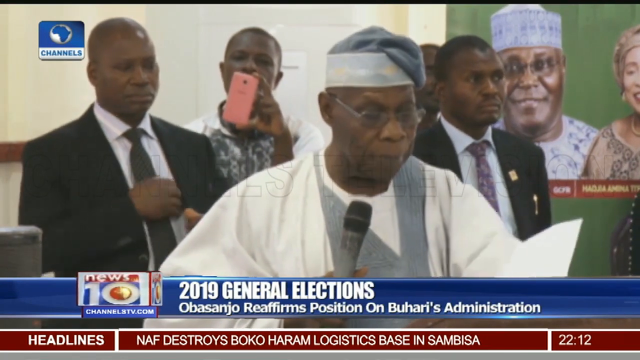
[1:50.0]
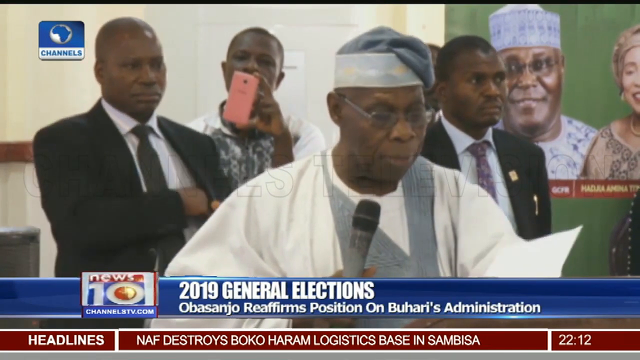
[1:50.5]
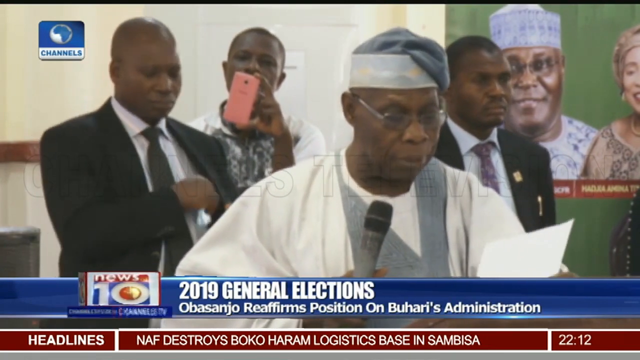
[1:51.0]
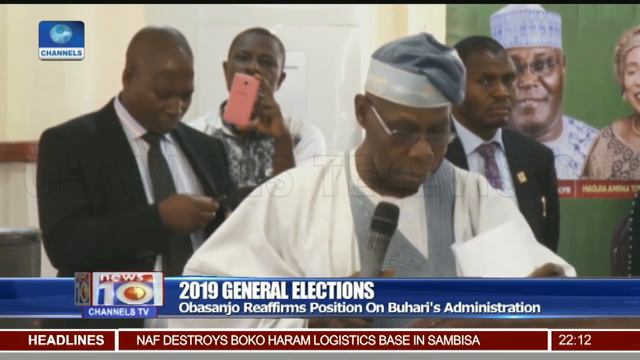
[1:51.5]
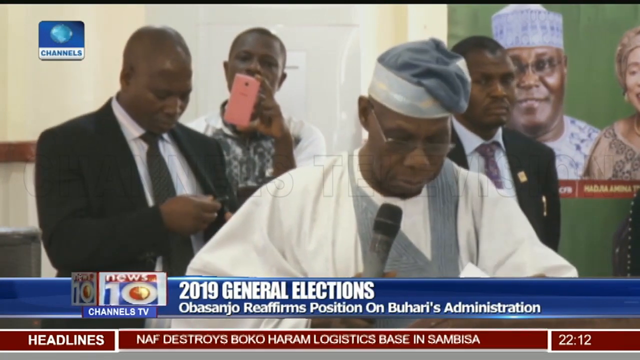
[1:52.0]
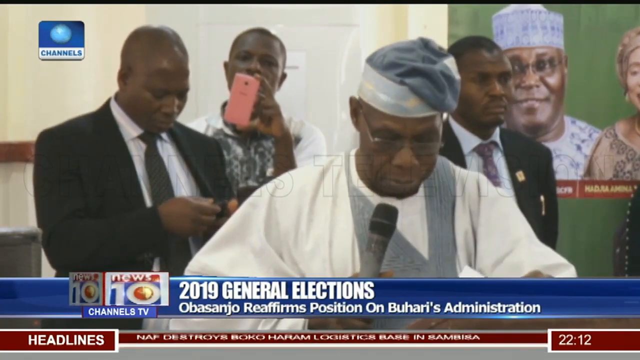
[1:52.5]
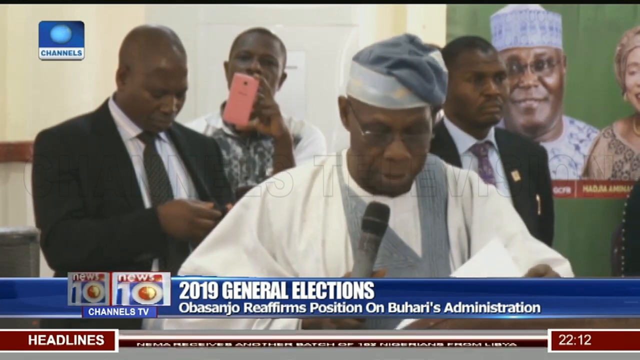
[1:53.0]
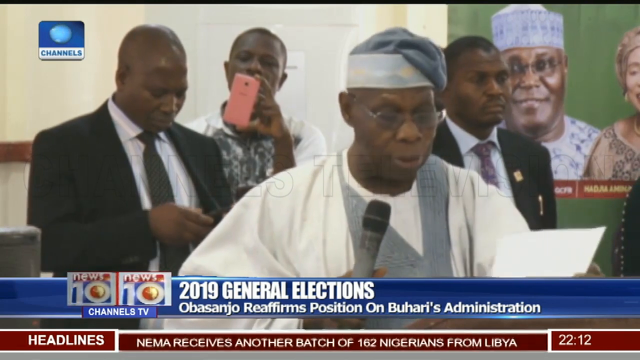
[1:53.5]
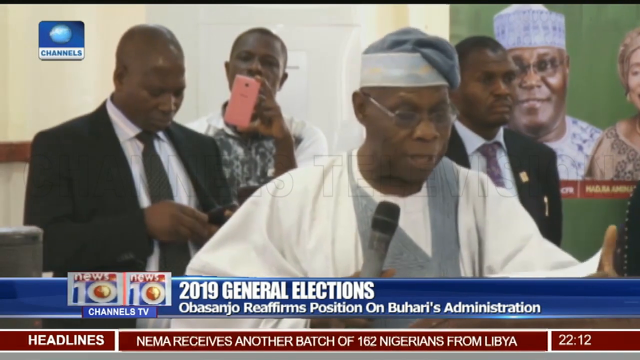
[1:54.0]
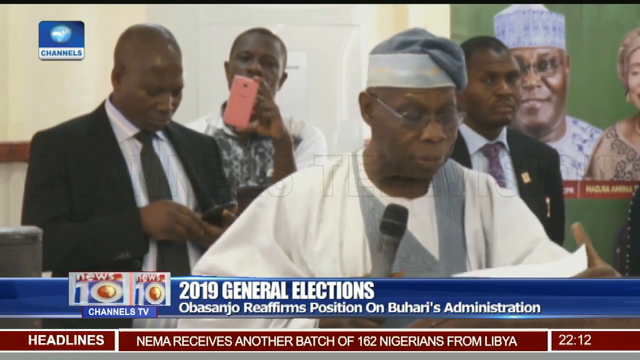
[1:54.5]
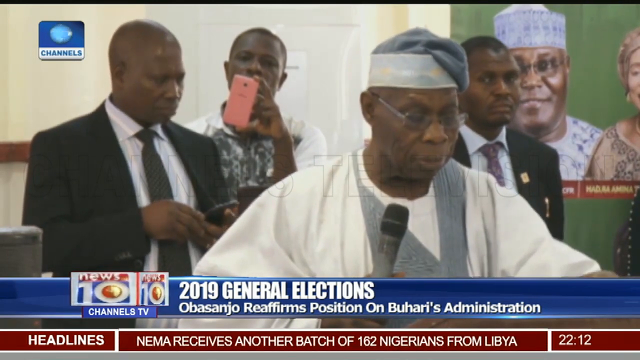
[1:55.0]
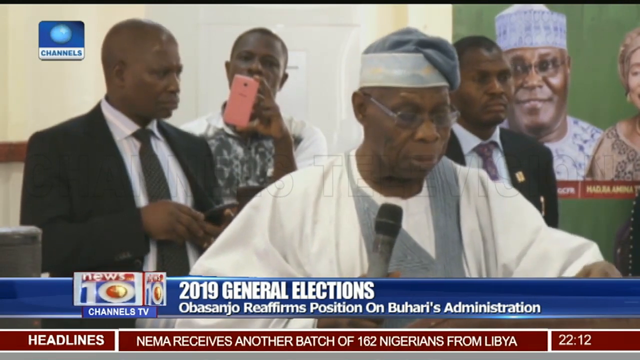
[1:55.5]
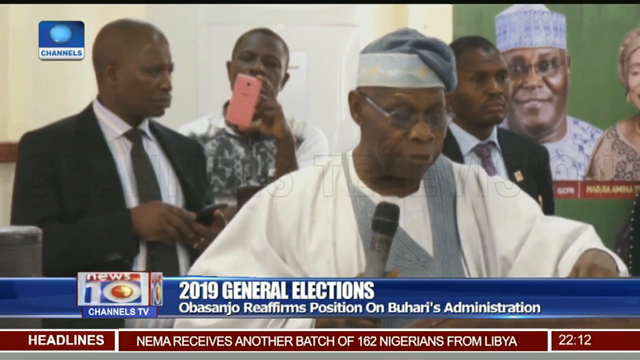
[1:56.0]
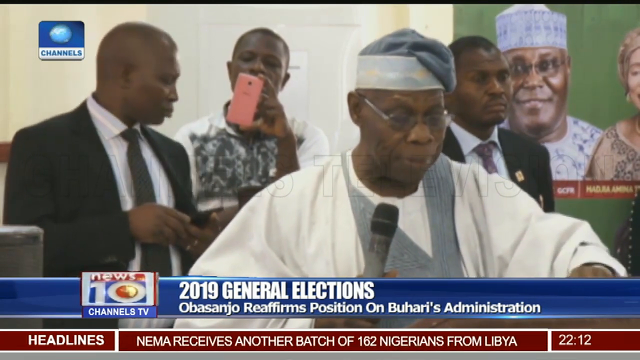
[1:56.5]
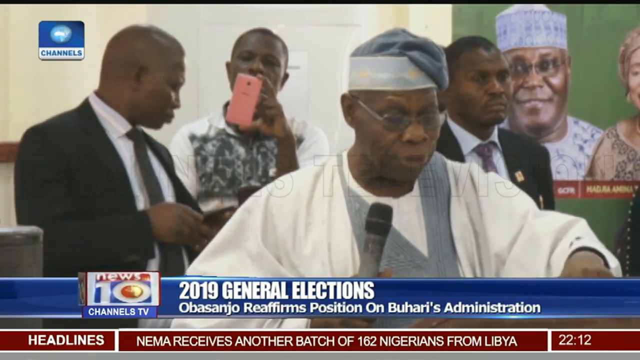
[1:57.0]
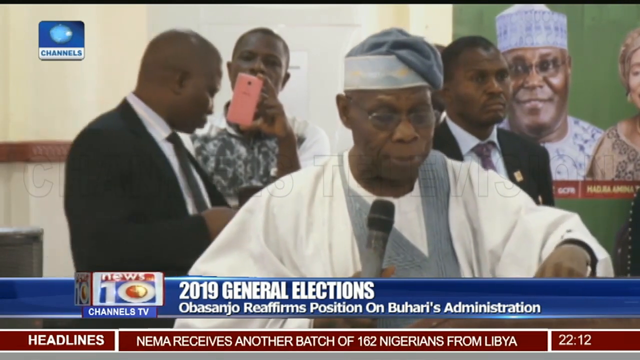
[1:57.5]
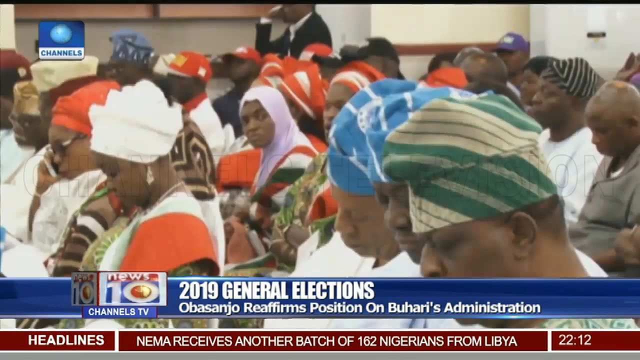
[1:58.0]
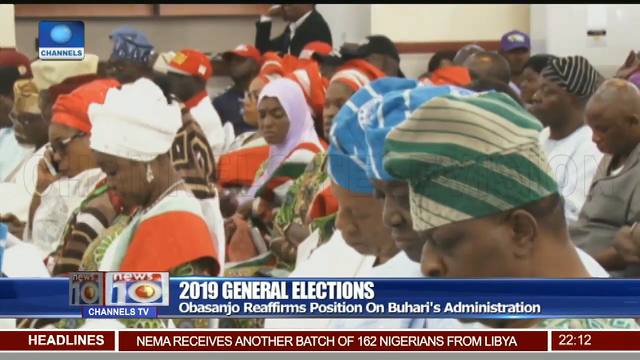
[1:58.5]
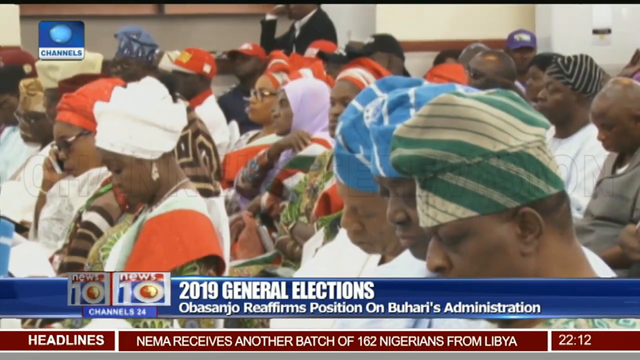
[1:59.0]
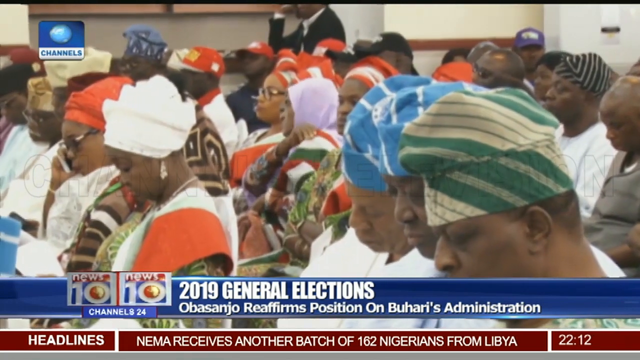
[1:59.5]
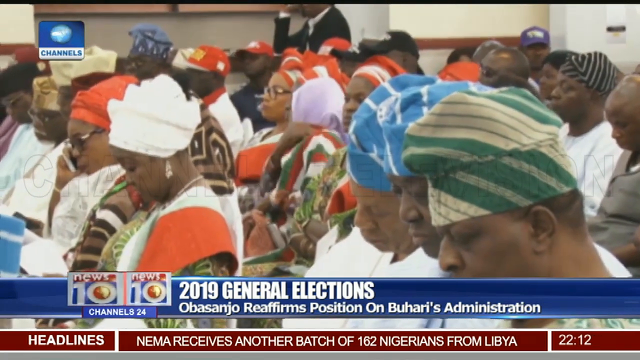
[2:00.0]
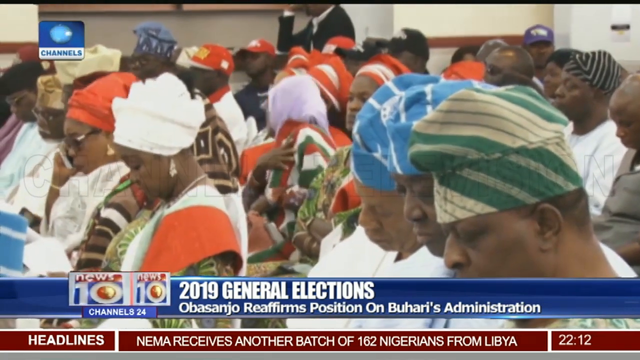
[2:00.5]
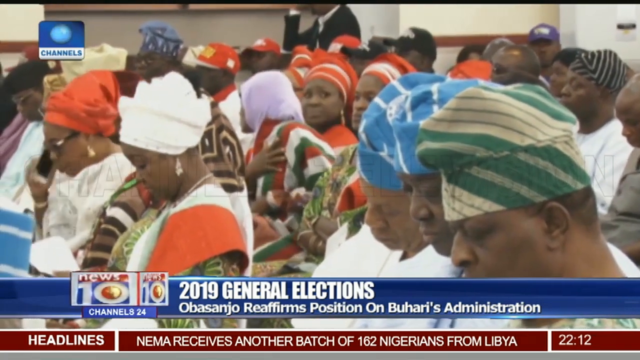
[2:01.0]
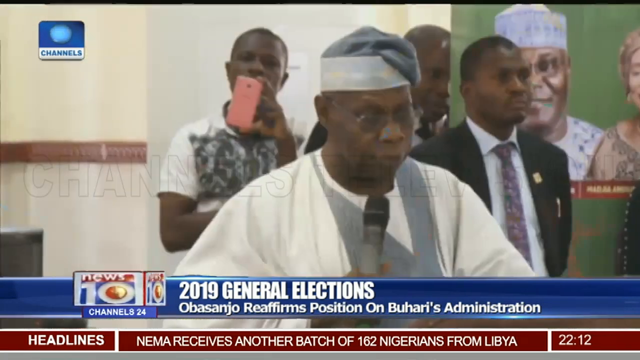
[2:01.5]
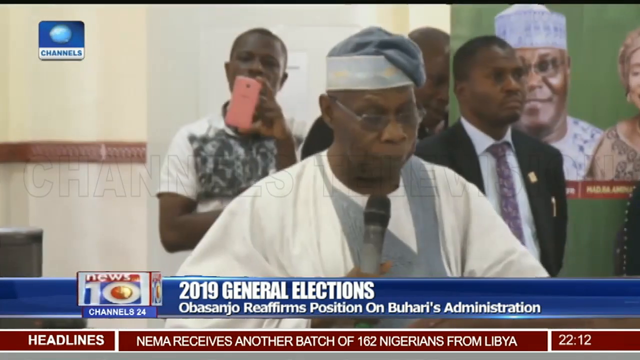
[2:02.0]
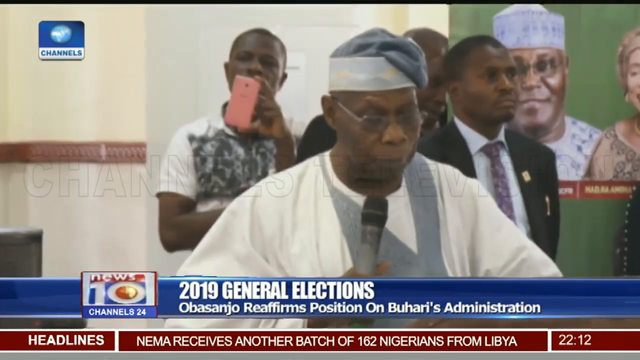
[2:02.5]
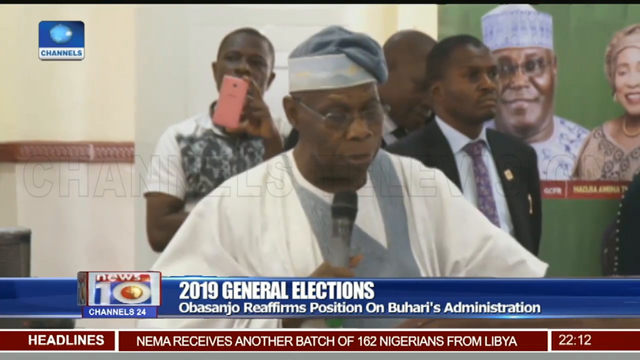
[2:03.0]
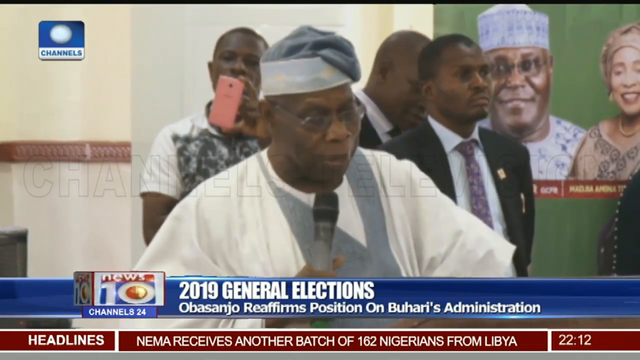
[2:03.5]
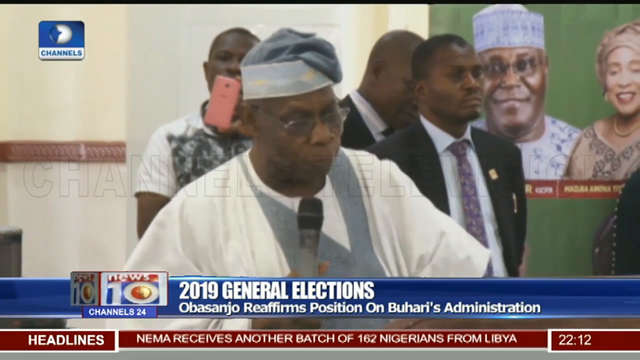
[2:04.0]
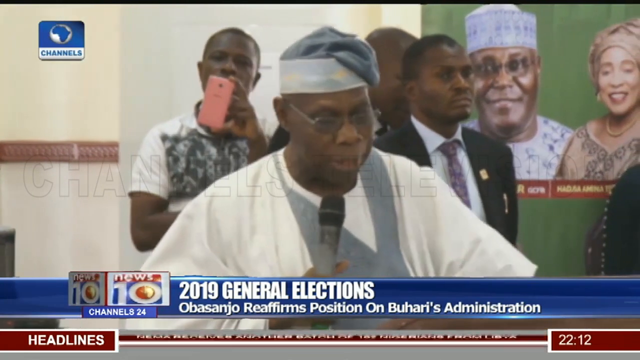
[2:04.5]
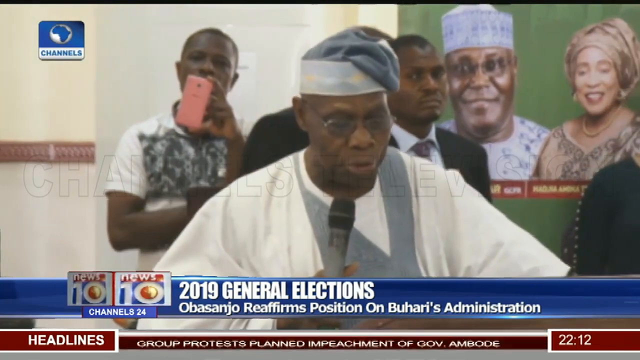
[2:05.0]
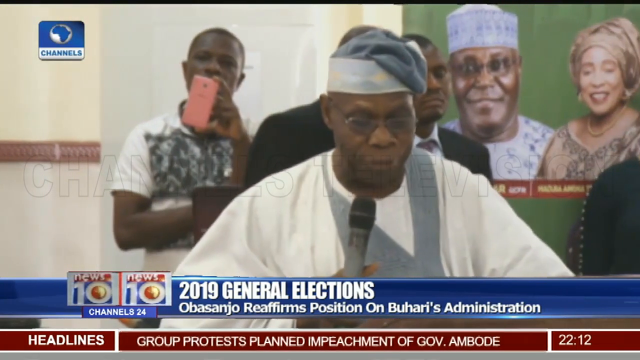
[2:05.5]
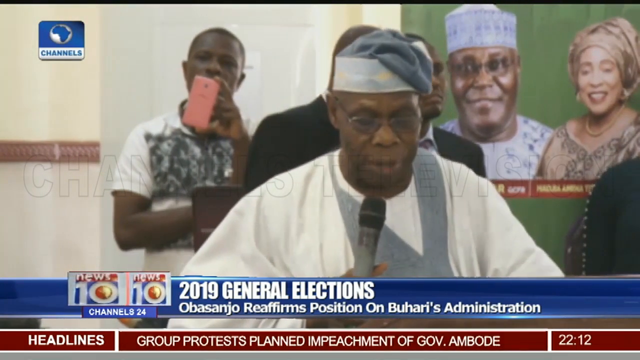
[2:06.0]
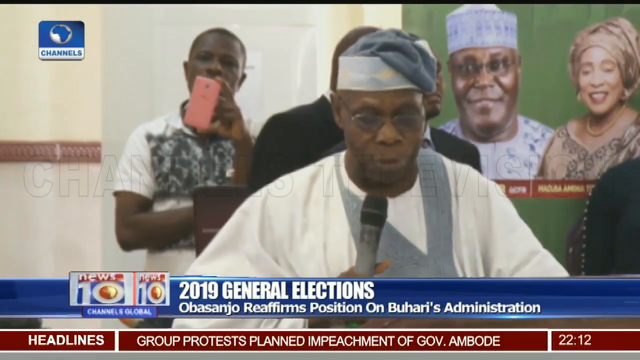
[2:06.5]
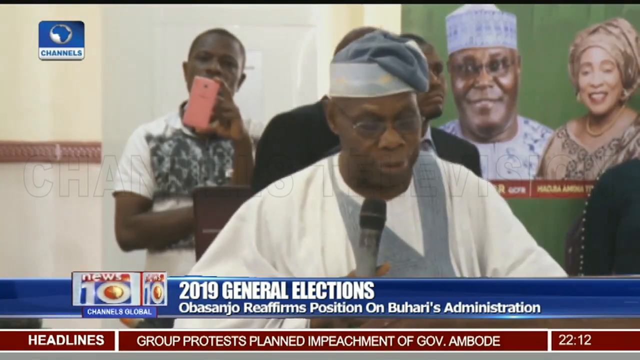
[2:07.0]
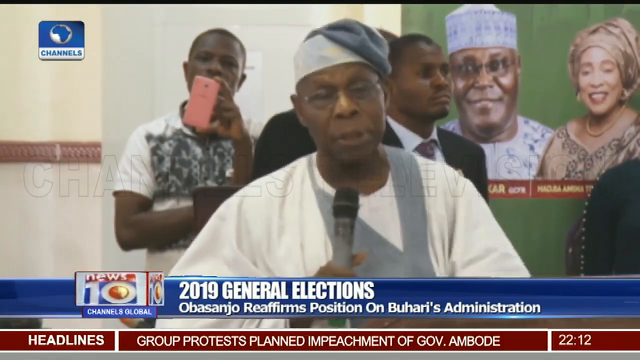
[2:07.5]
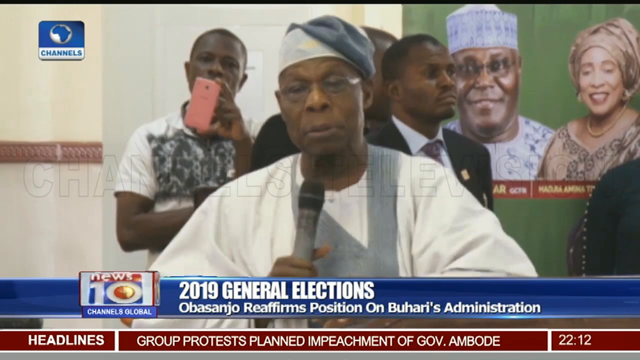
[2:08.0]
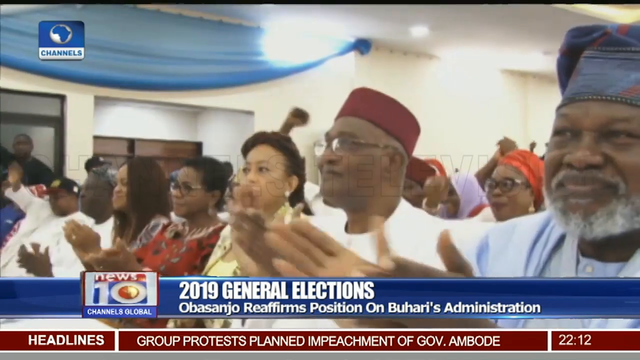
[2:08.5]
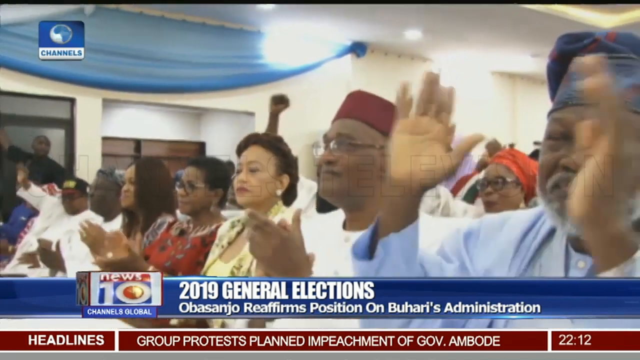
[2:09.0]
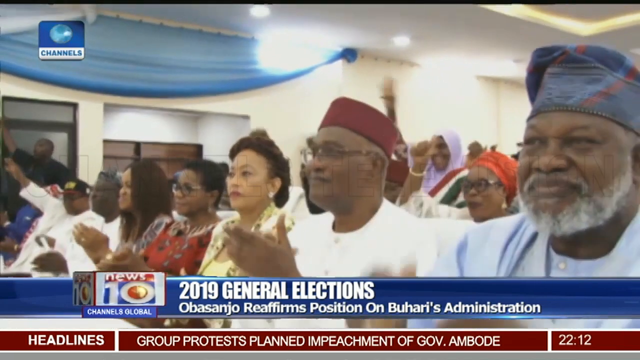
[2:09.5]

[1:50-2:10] A man holds a pink phone and seems to be taking the video; he wears a white t-shirt with flowers. Behind him is a man in a black suit who looks like security, and next to that man is another in the same suit, apparently also security. They seem to be protecting the person who holds the mic. A lot of people are clapping their hands. The person in front of the man filming wears a black suit with a white t-shirt inside and what appears to be an orange tie. The other man next to the security wears a black suit, a blue t-shirt and apparently a maroon tie. On the front of the black suit there is an orange flower.